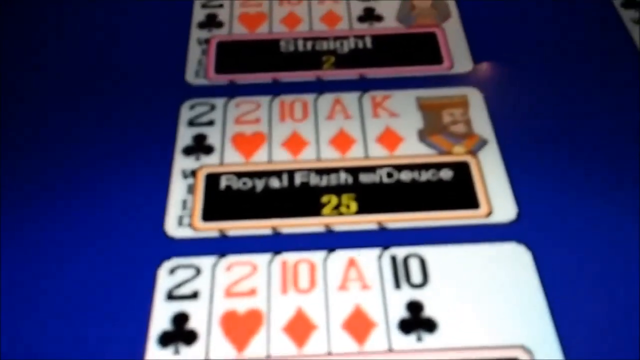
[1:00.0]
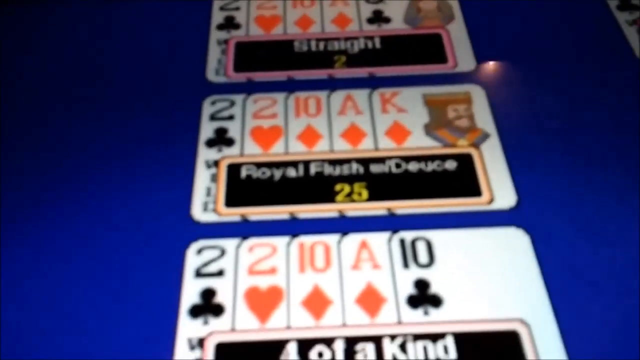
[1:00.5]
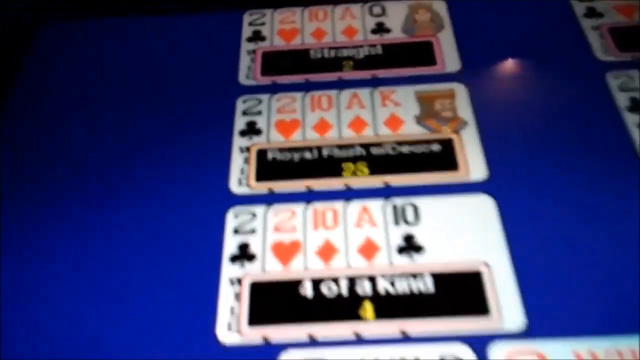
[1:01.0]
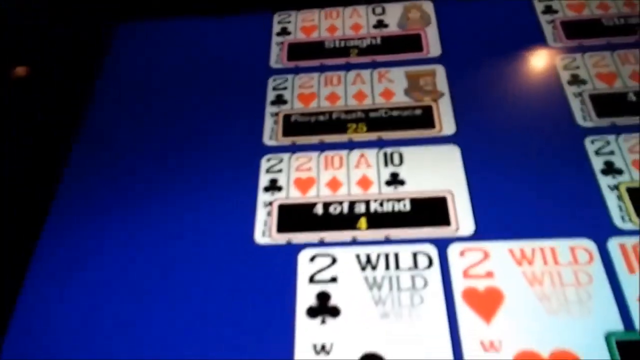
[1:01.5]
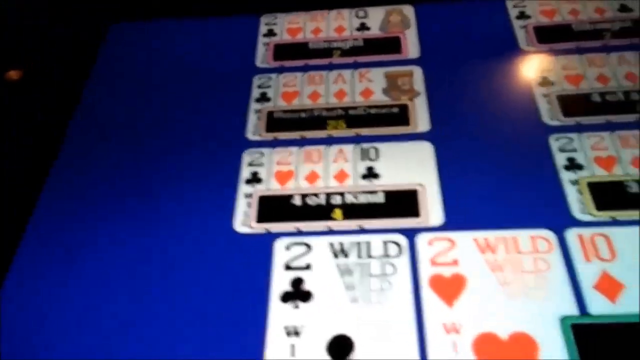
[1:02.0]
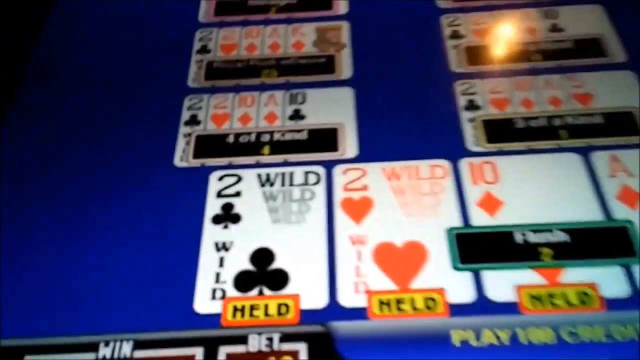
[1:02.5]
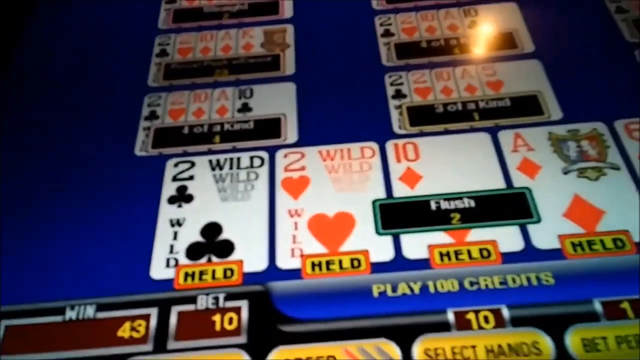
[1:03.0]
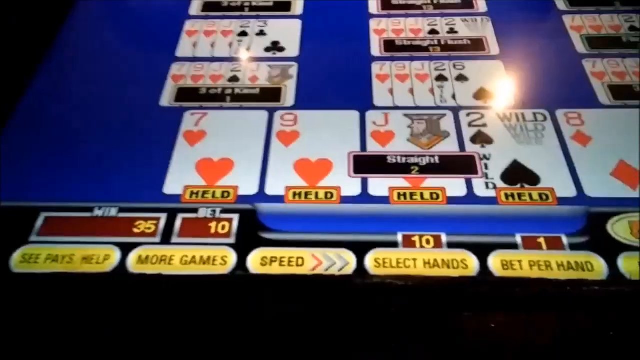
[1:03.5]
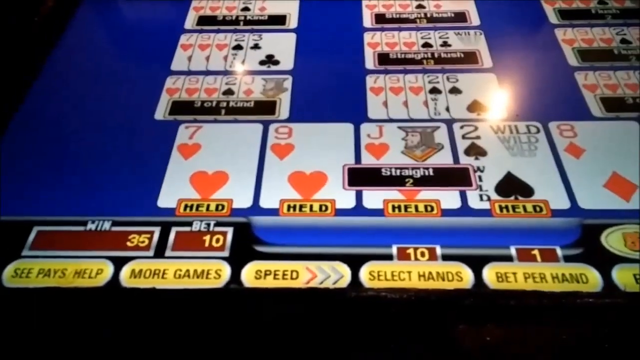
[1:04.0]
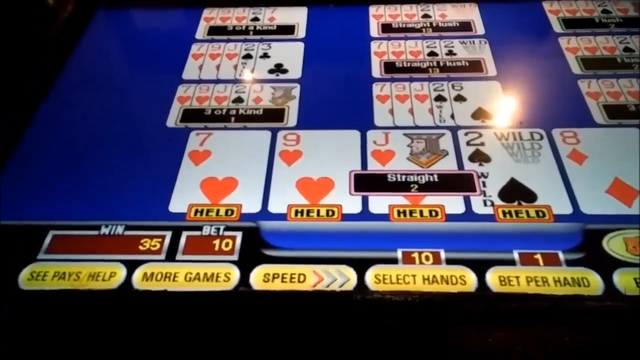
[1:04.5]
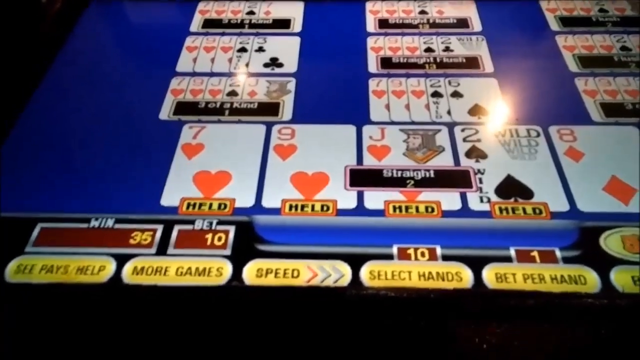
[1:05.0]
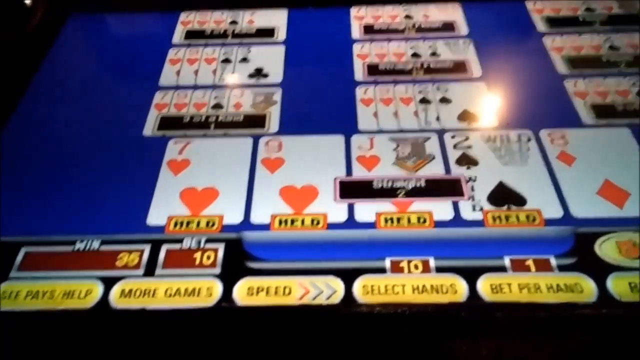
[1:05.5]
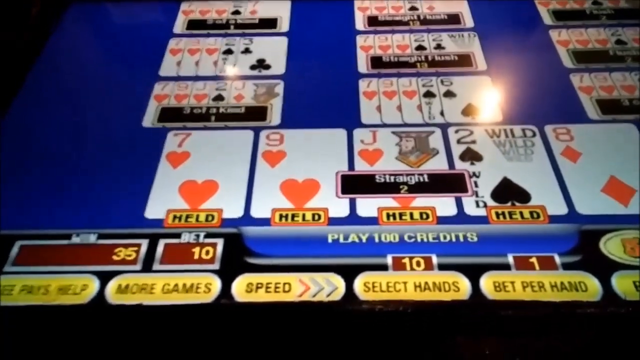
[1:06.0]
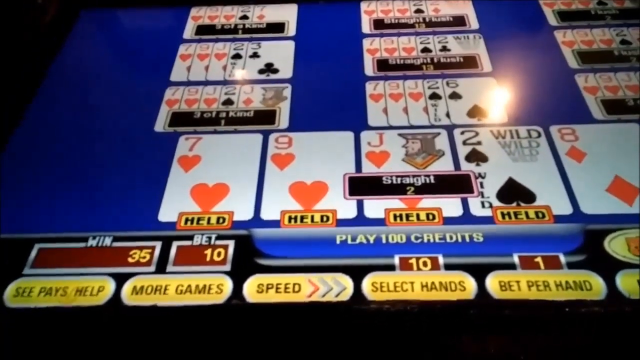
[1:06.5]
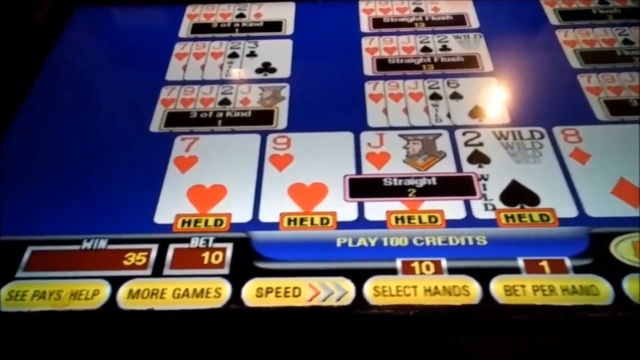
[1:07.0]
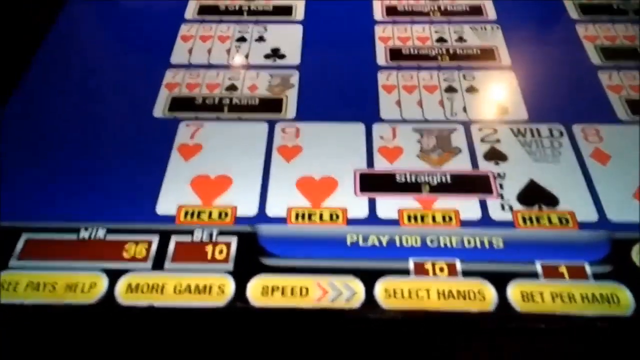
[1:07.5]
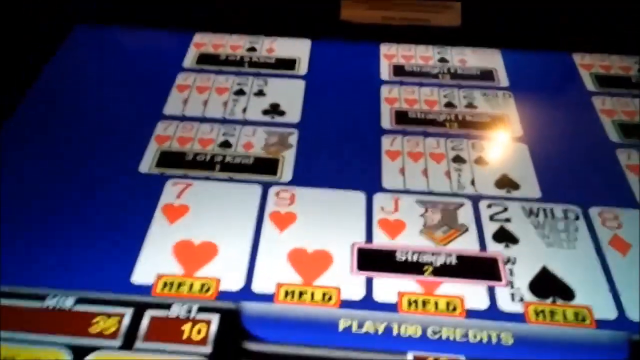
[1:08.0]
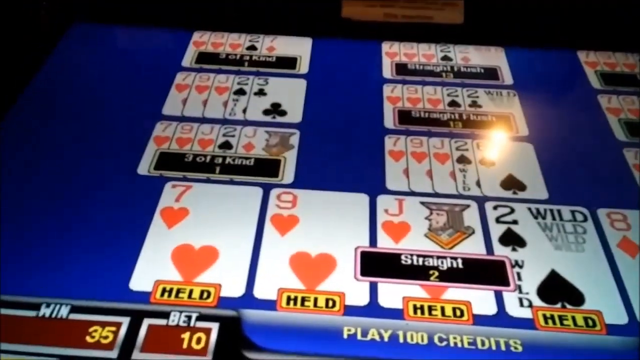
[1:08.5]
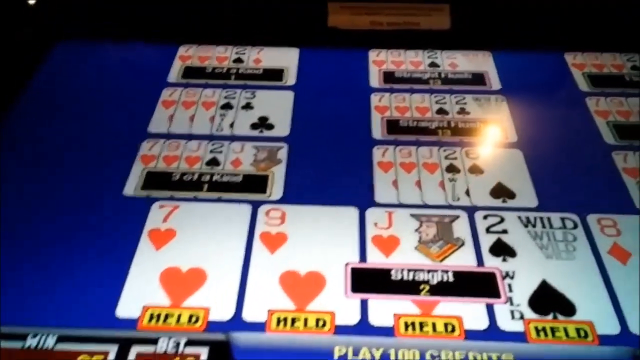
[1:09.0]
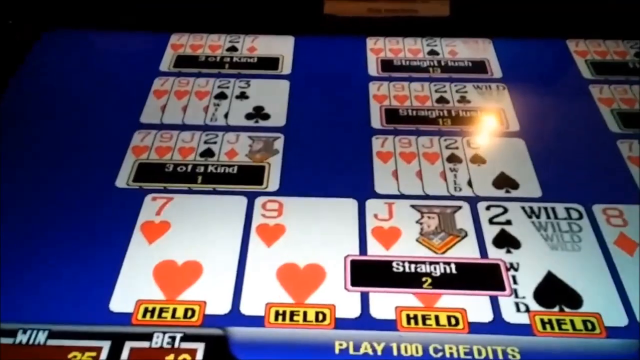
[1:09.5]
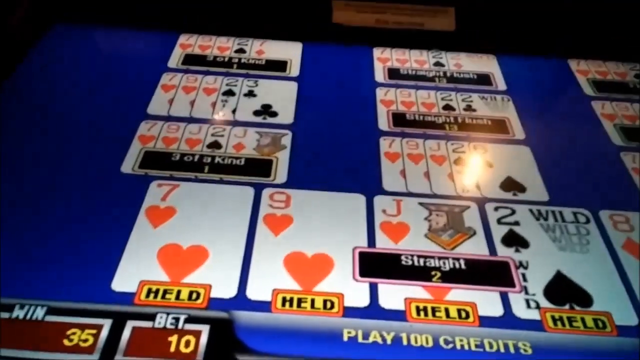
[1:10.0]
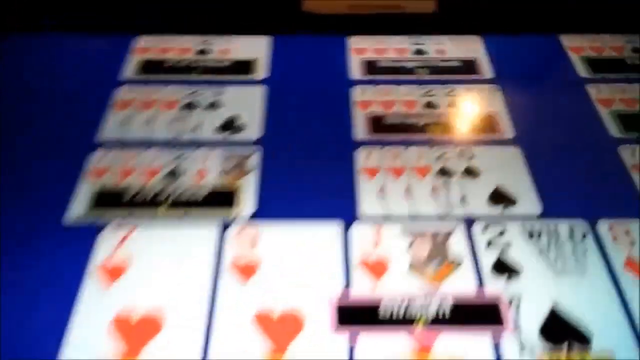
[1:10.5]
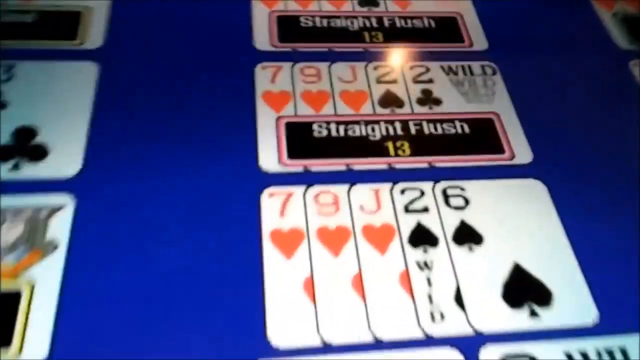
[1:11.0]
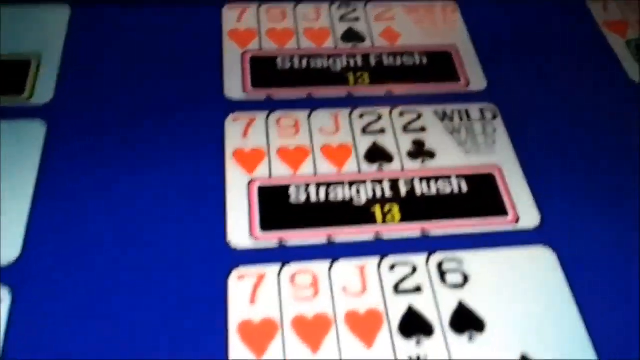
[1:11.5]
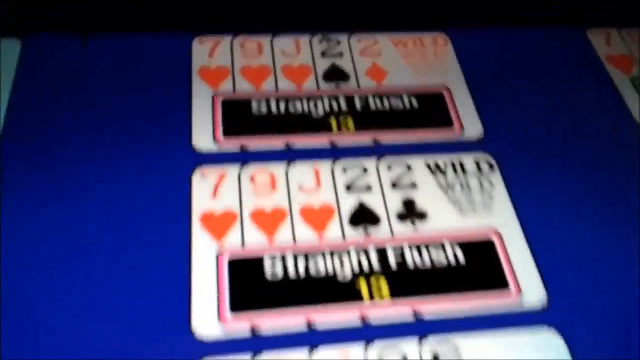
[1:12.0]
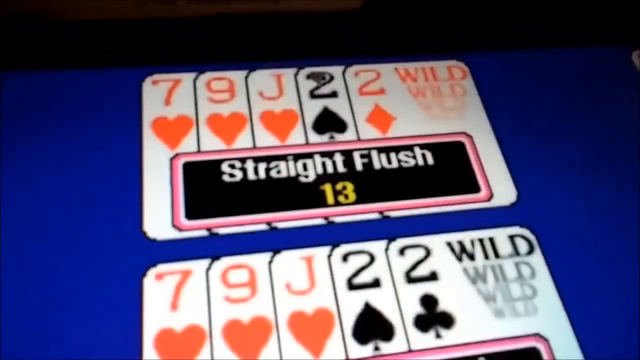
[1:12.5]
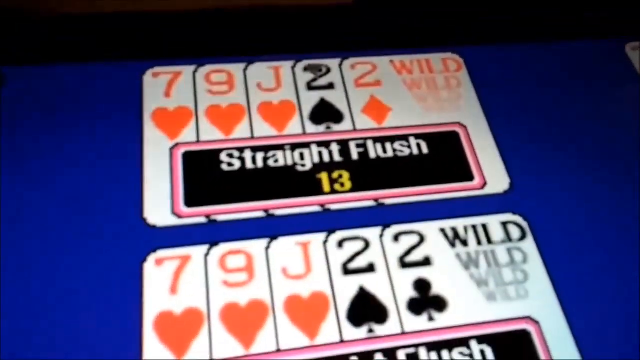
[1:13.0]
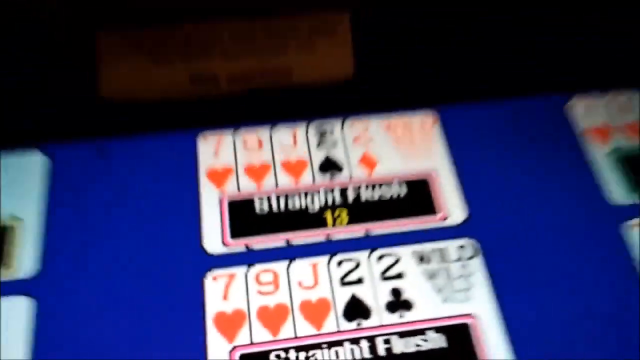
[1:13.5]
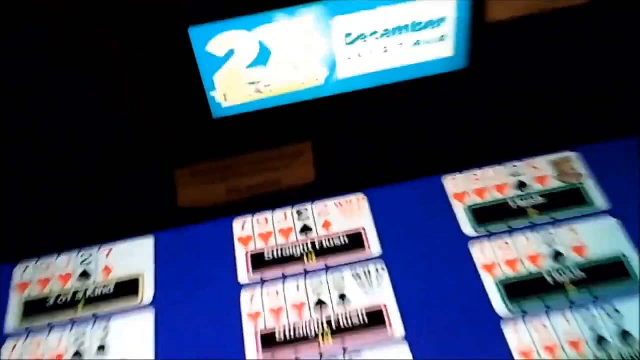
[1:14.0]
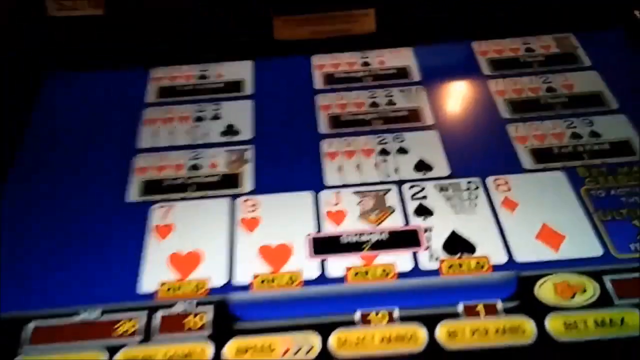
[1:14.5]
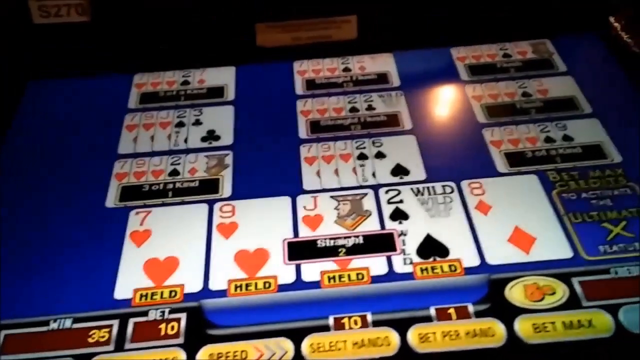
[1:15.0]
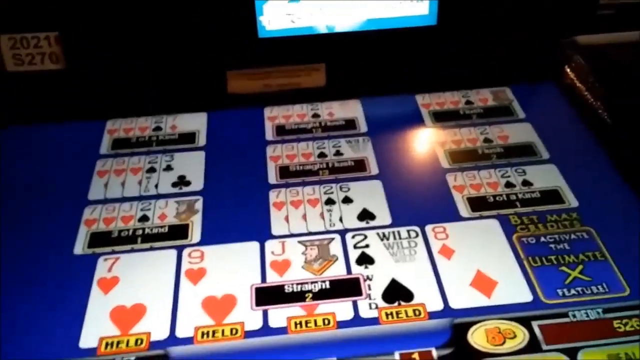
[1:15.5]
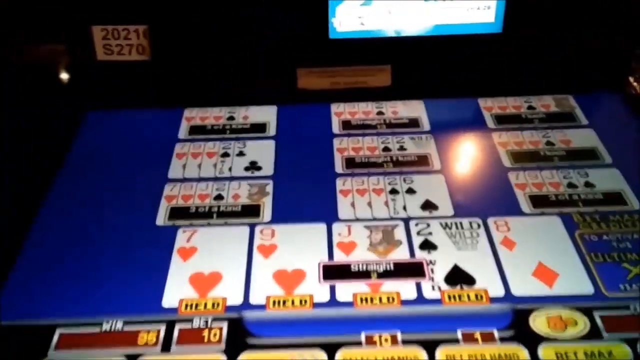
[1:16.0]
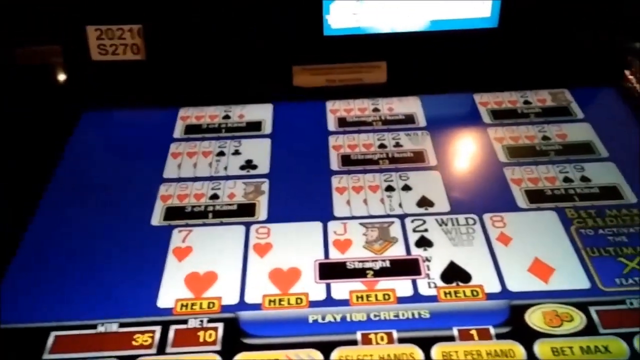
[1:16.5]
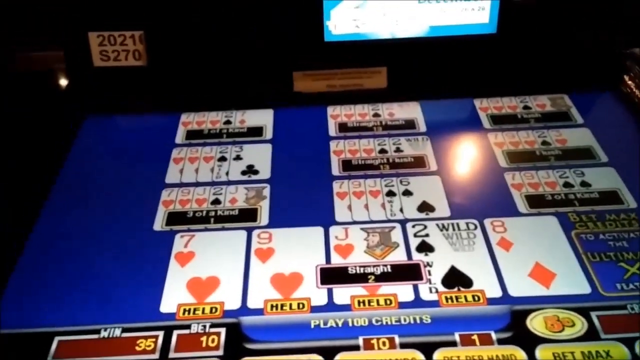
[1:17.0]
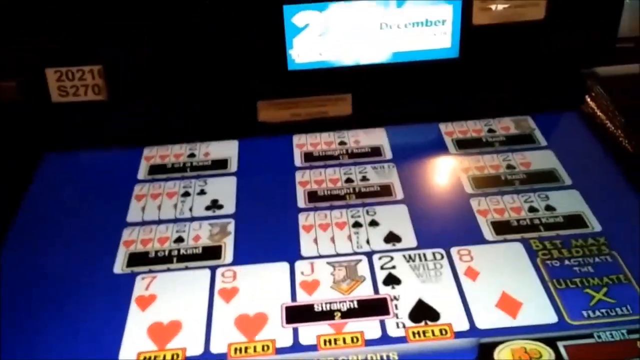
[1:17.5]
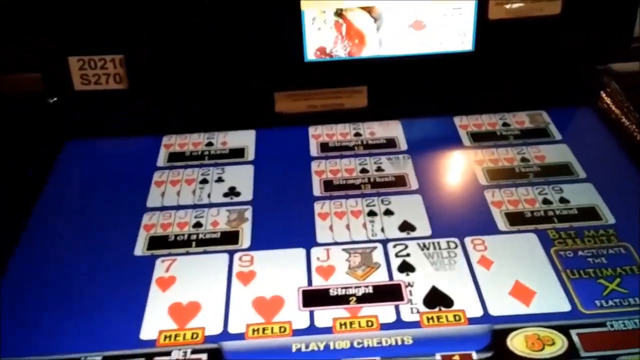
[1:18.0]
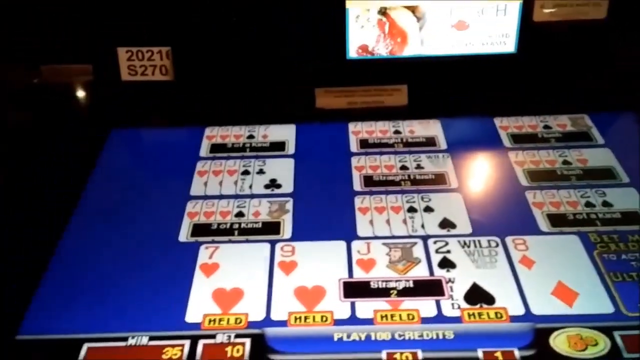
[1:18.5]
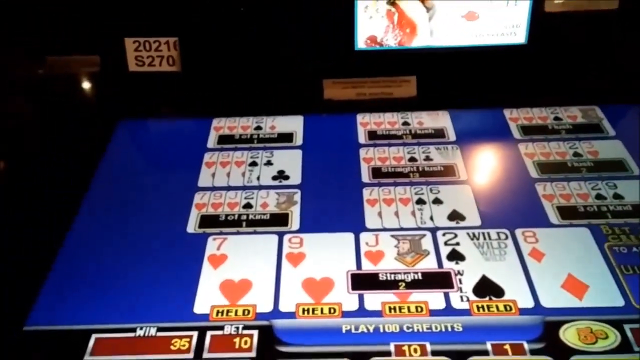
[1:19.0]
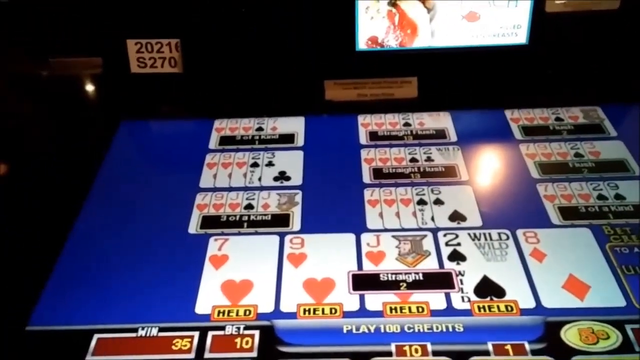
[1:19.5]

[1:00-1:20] The camera is zoomed in on the "royal flush with deuce" hand: the two of clubs with "wild" underneath, the two of hearts, the ten of diamonds, the ace of diamonds and the king of diamonds. The hand below it says "four of a kind": the two of clubs, two of hearts, ten of diamonds, ace of diamonds and ten of clubs. The view goes to the player's hand and cuts again, now showing the seven of hearts, nine of hearts and jack of hearts, all held, the two of spades as a held wild card, and the ace of diamonds, making only a straight. The camera moves around as if the person is talking and zooms in on another hand labeled "straight flush 13": the seven of hearts, nine of hearts, jack of hearts, two of spades and two of clubs, with the twos presumably wild. It then moves to another hand above that one, also "straight flush 13", with the same cards except that the last card is the two of diamonds. The camera pans out to show the entire board of the nine other hands along with the player's hand. The board behind is blue, and there appears to be some sort of advertising screen above it.